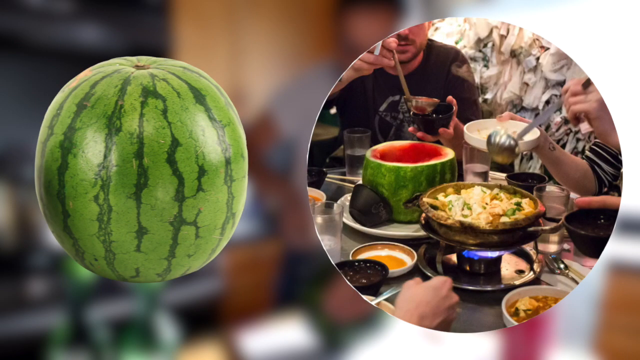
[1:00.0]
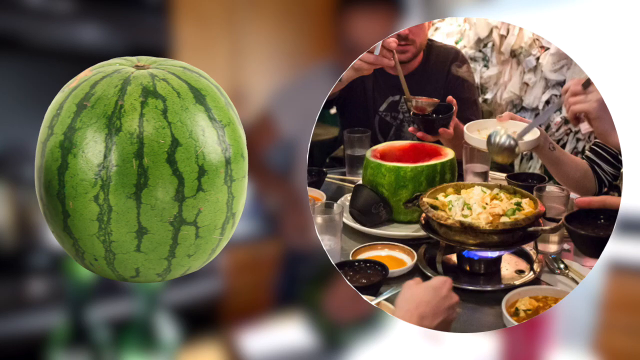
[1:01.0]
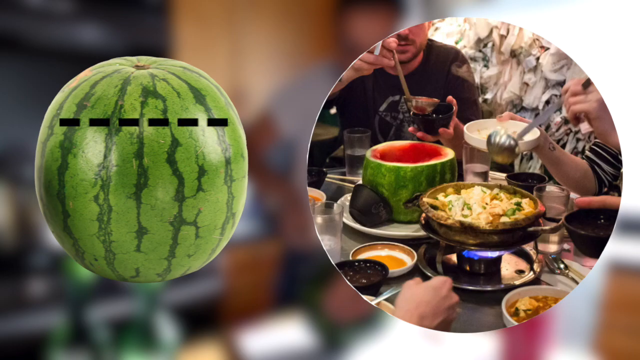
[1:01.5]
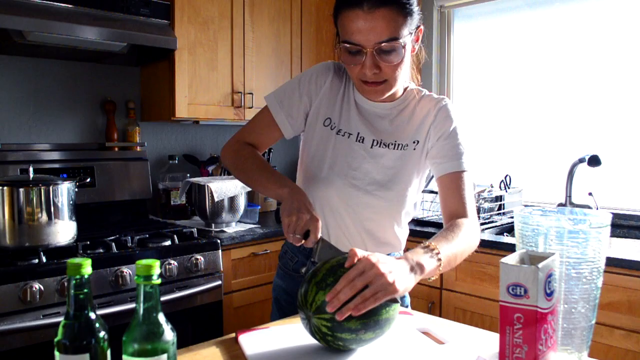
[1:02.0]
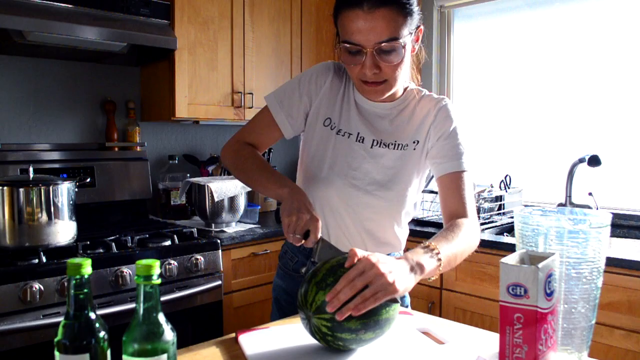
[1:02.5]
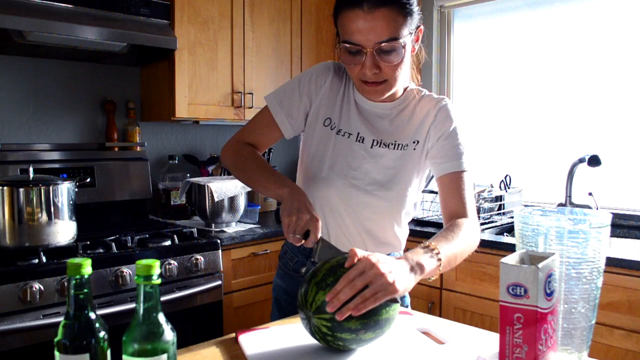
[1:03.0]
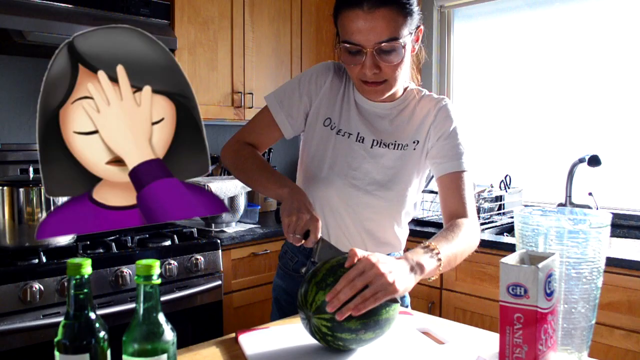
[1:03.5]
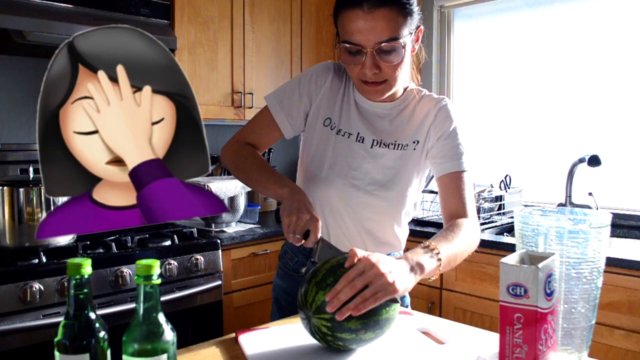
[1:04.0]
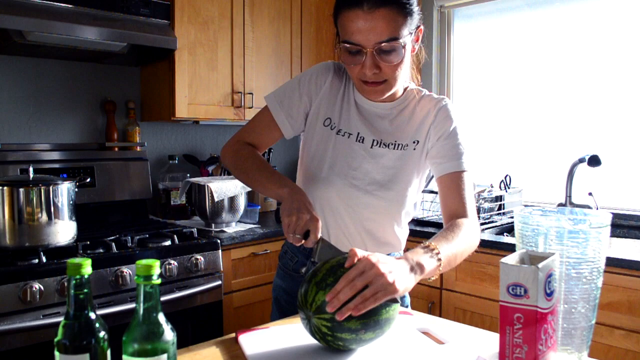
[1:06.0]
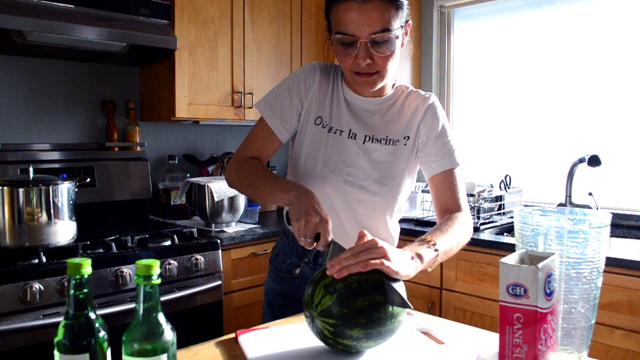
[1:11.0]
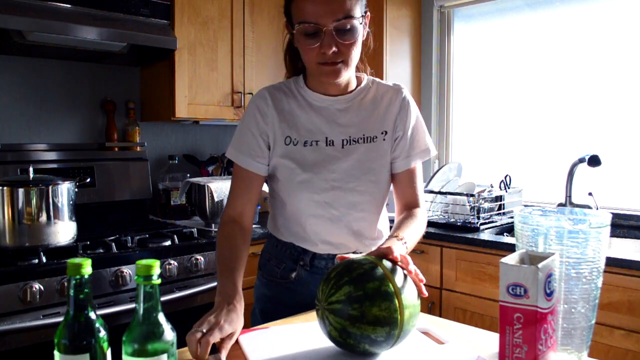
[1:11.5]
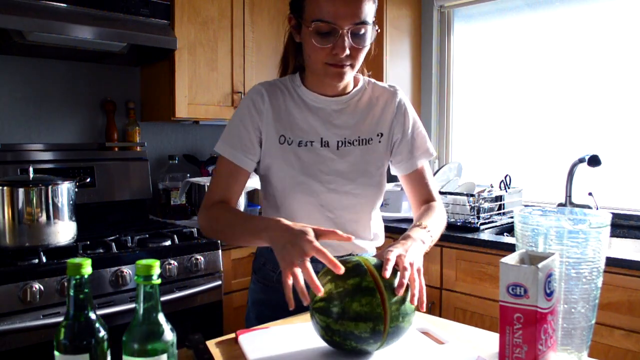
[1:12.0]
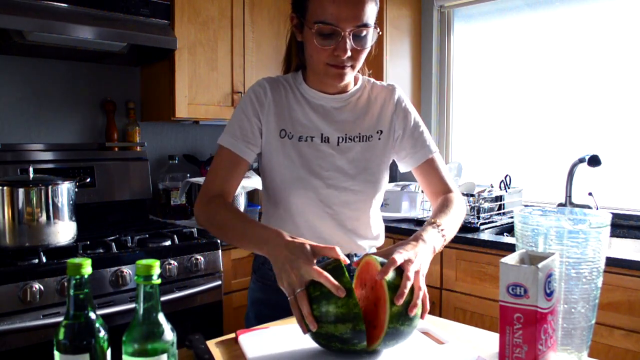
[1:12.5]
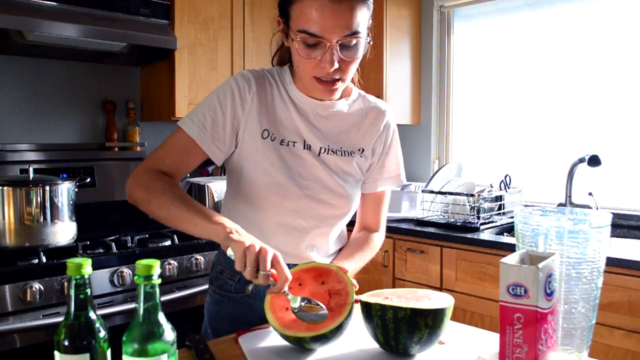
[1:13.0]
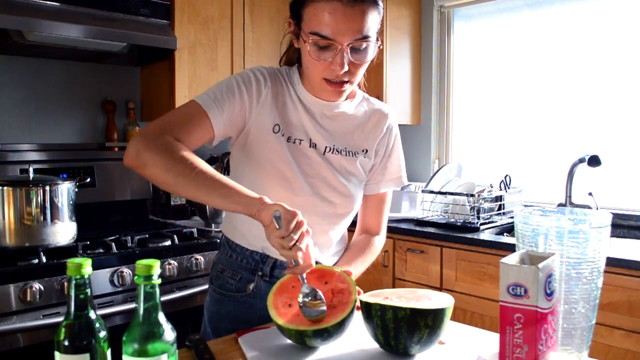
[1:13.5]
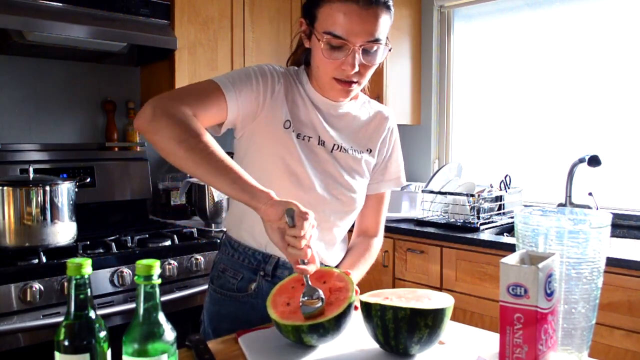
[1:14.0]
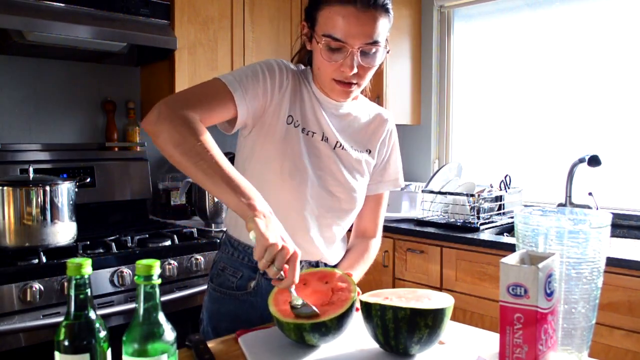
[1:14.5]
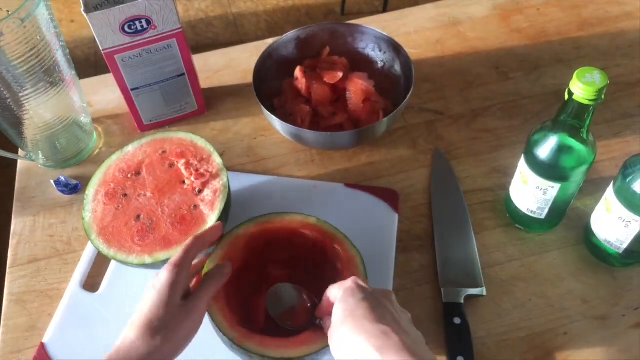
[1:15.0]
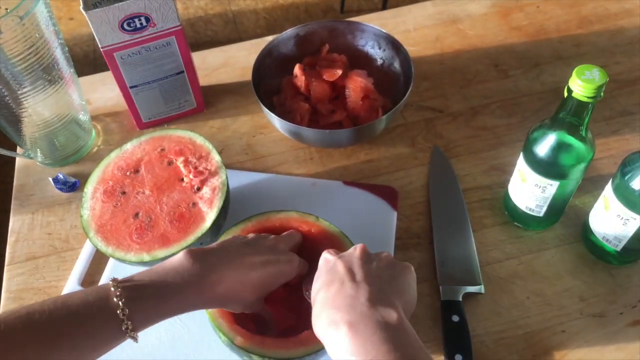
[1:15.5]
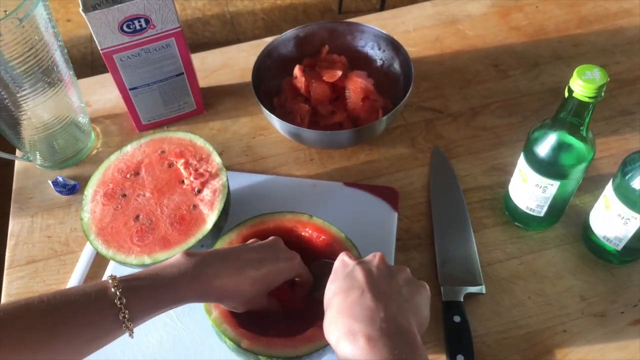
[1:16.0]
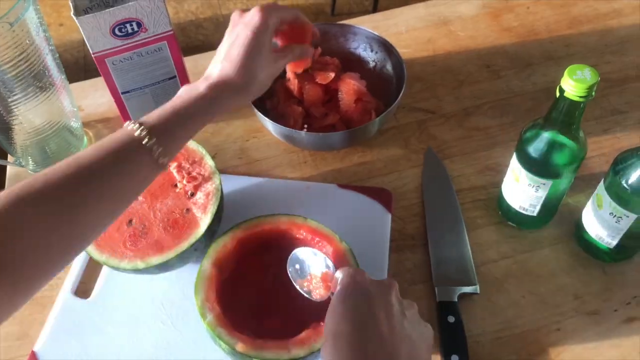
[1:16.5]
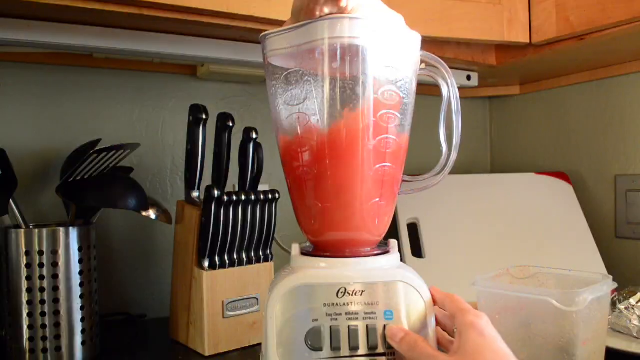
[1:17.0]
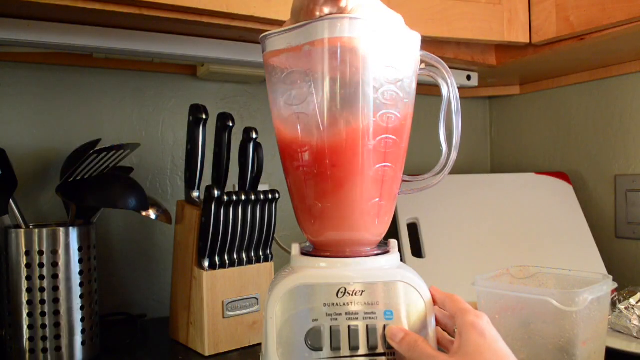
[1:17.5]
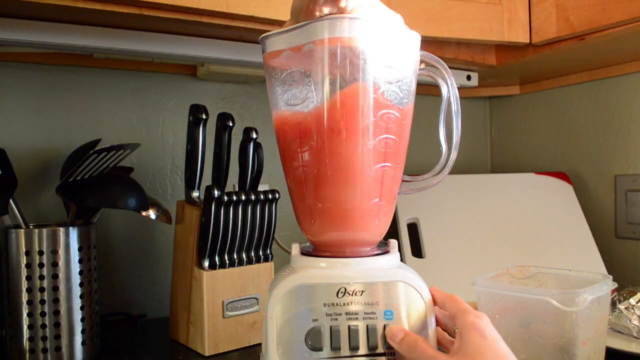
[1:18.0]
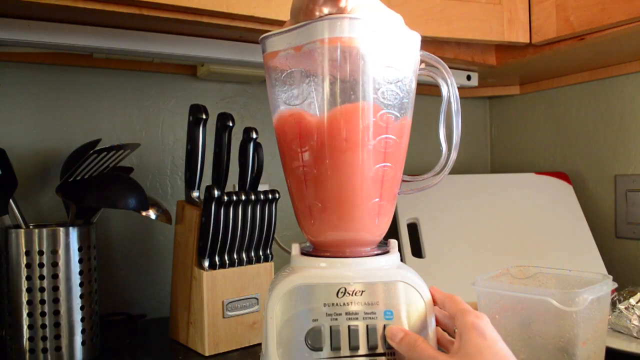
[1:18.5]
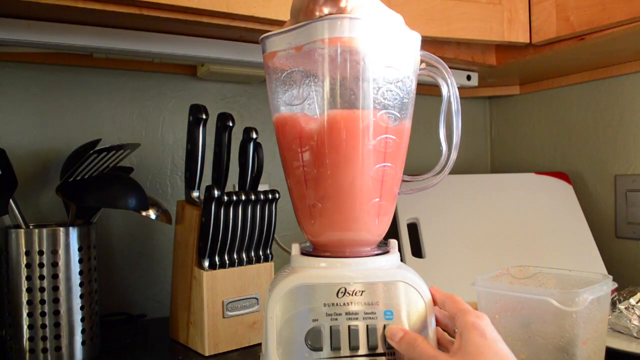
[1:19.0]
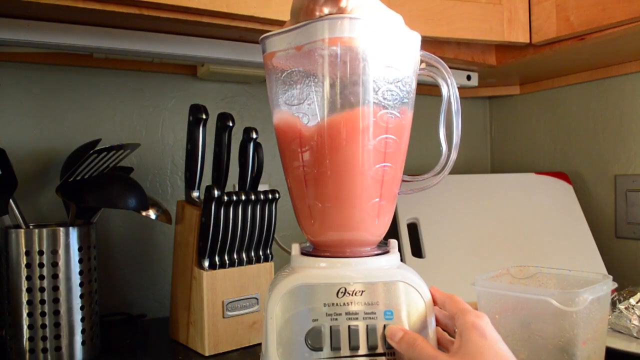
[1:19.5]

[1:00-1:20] Two images are superimposed over an out-of-focus background of a woman preparing something in her kitchen. The left image shows a whole, uncut watermelon. On the right, in a large circle, is an image of people enjoying some sort of beverage from a watermelon cut in half, scooping it into cups, with some food on the table; they generally seem to be enjoying themselves. The video returns to the woman in her kitchen, wearing a white T-shirt, cutting a watermelon in half. An emoji pops up on the left side of the screen; it looks like an Asian girl emoji with the palm of her hand to her face, seemingly frustrated, as if the woman is doing something wrong. The woman slices the watermelon, pulls it apart and digs the flesh out. A blender with pieces of watermelon in it is then shown as she makes her mixture.